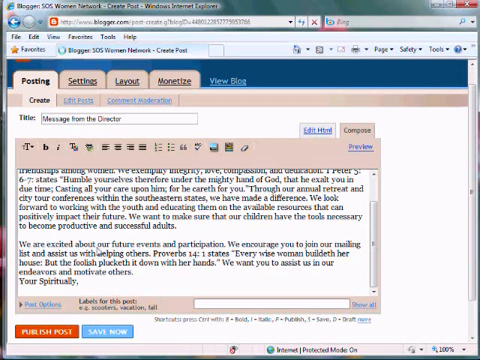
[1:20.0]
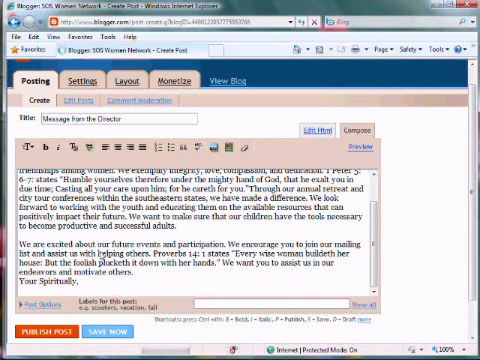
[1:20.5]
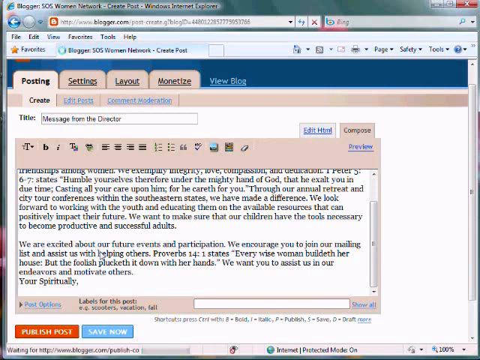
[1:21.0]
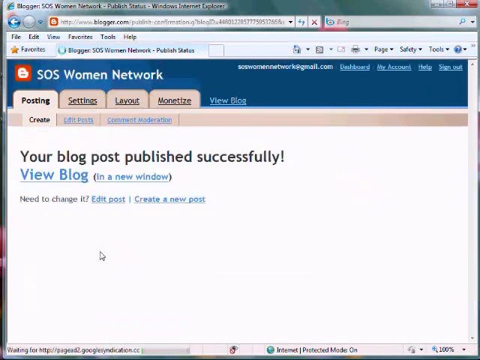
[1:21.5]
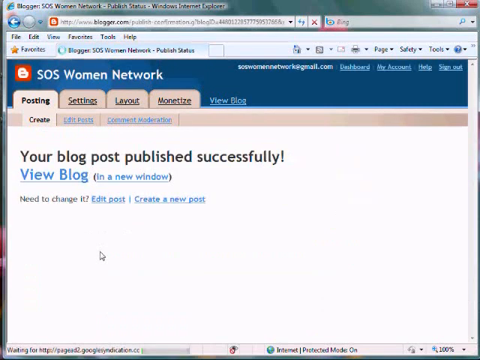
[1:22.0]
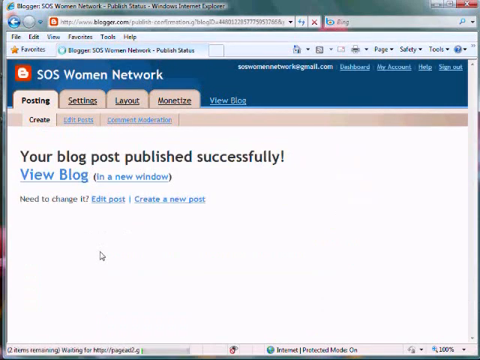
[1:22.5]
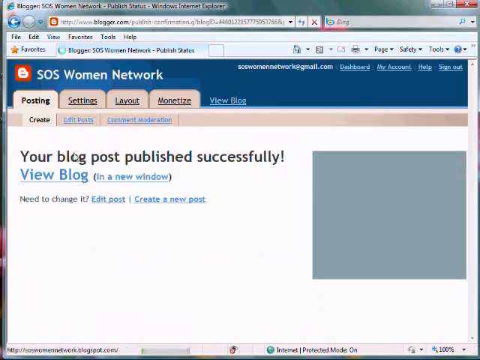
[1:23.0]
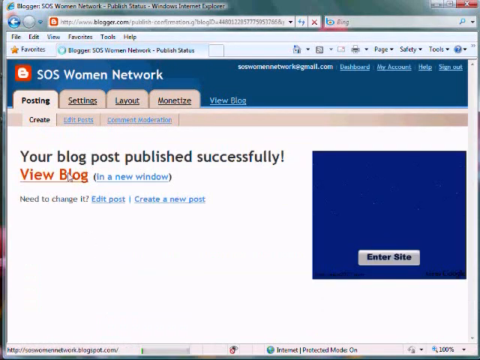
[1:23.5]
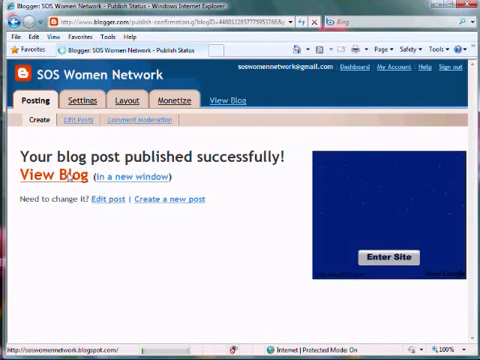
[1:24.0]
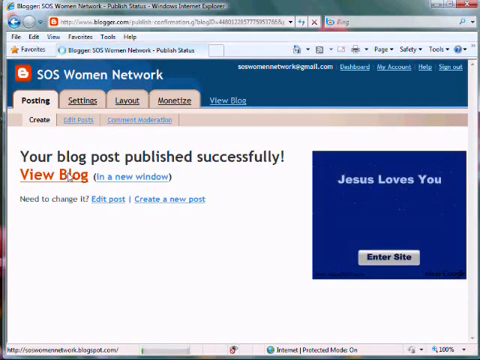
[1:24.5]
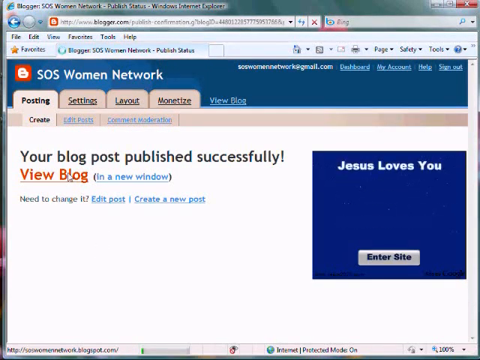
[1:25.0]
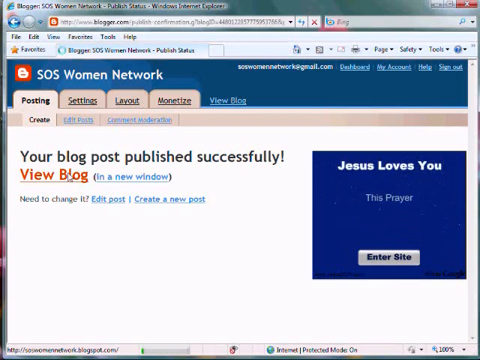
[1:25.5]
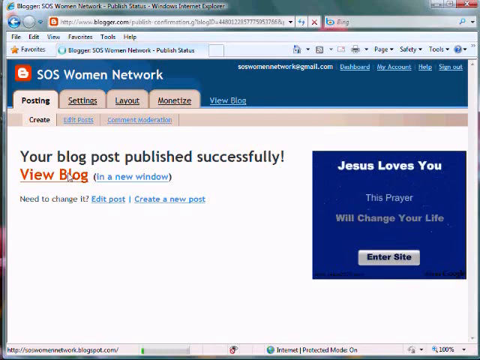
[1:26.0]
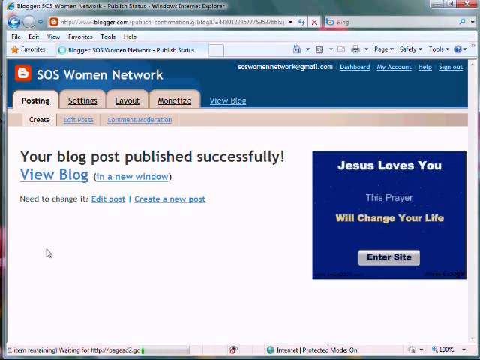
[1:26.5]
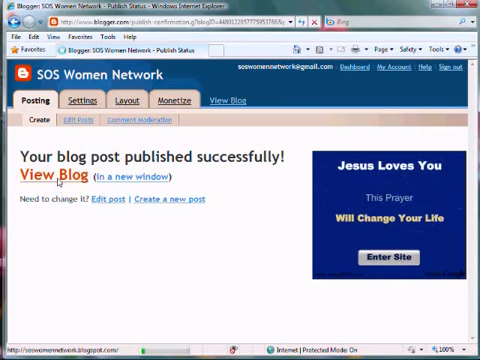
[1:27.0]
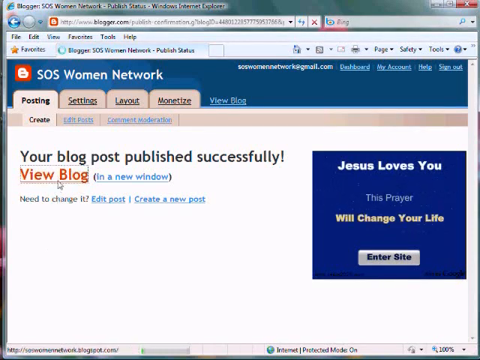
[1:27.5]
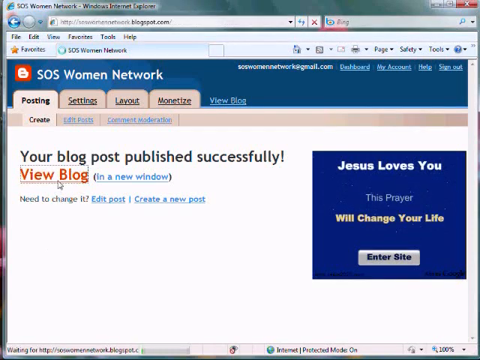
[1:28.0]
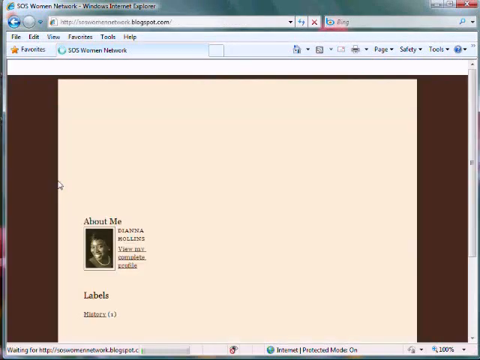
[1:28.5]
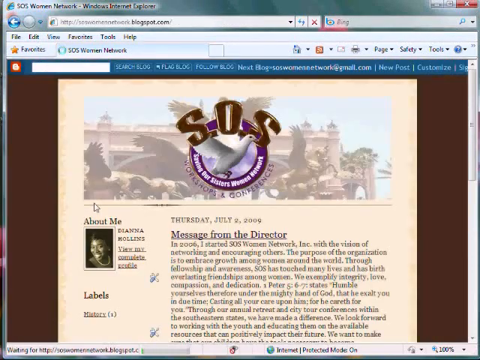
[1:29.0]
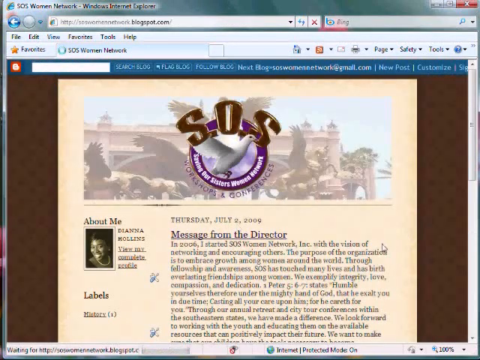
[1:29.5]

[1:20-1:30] The user clicks the publish post button, and the page loads before the next page appears. It has the same layout as before, but the title and body input boxes are replaced with text saying "your blog post published successfully", with buttons below it: one says "view blog" and the next says "in a new window" in parentheses. Below those buttons is text saying "need to change it" and two buttons for "edit posts" or "create a new post". A large ad appears on the right part of the panel, saying "Jesus loves you, this prayer will change your life, enter site" on what looks like a navy blue background. The user hovers over the view blog button and clicks it.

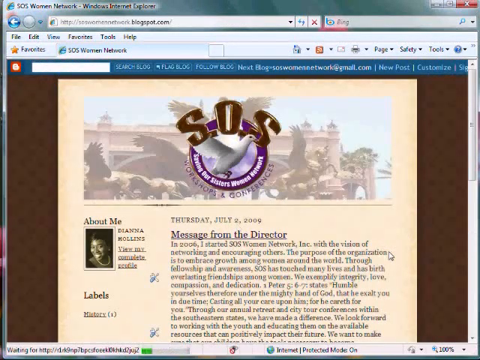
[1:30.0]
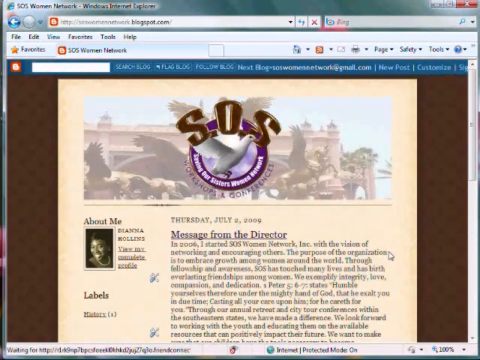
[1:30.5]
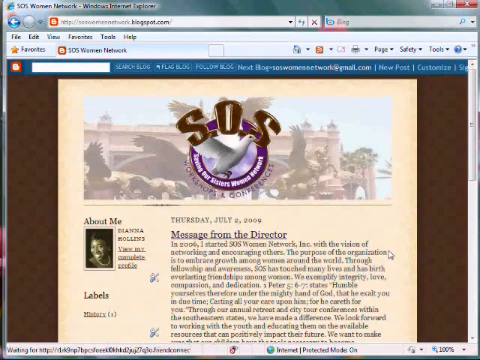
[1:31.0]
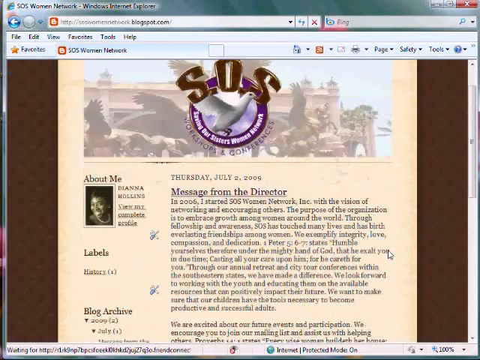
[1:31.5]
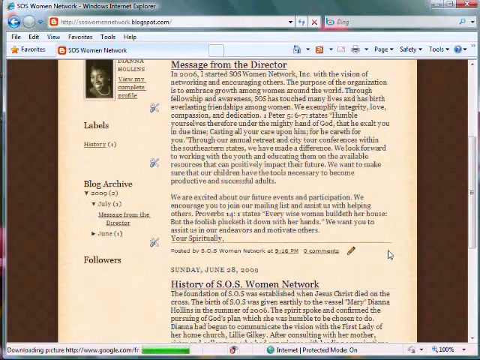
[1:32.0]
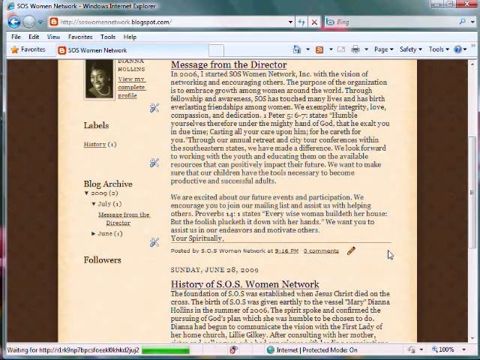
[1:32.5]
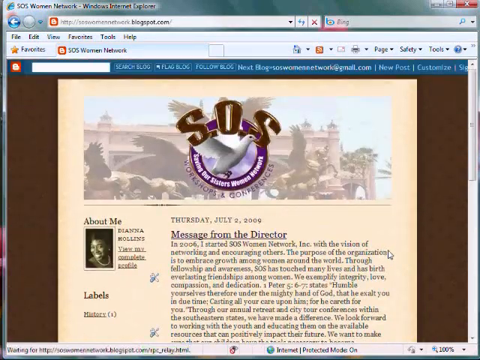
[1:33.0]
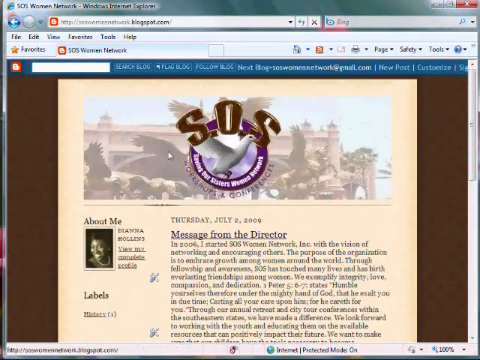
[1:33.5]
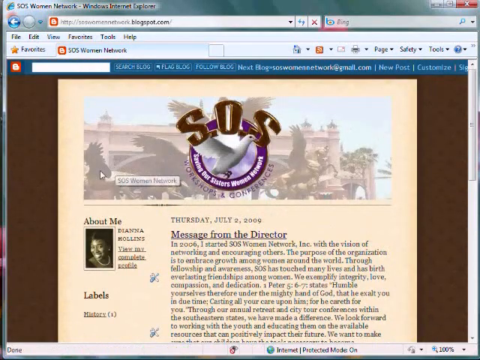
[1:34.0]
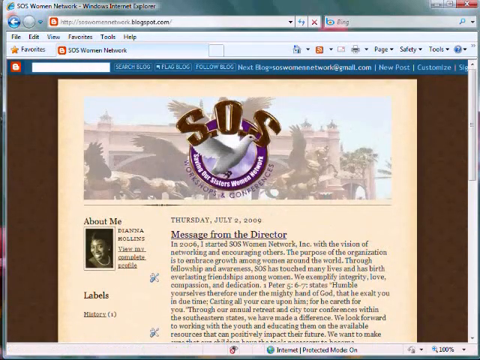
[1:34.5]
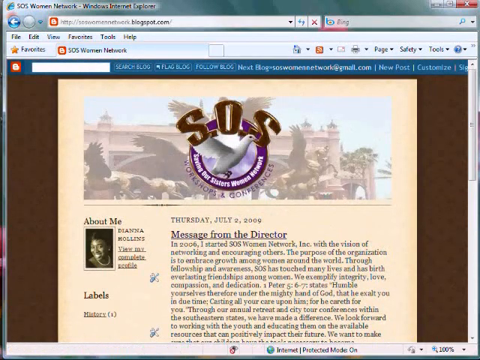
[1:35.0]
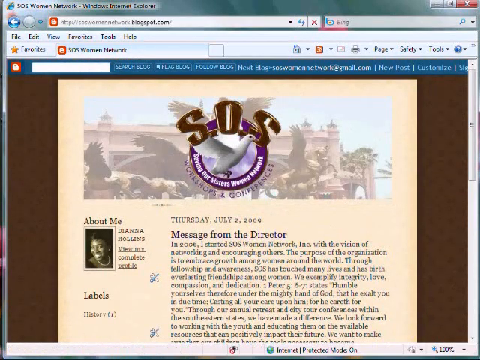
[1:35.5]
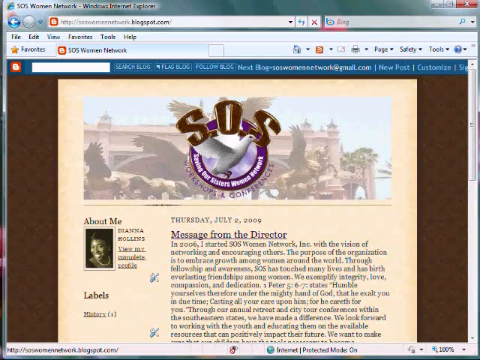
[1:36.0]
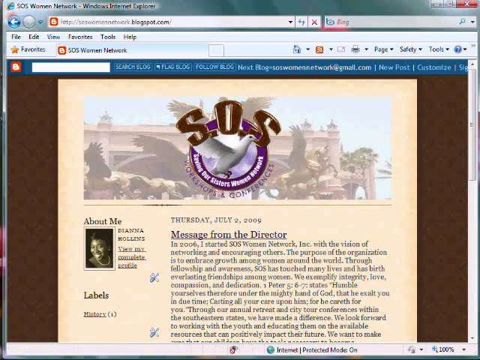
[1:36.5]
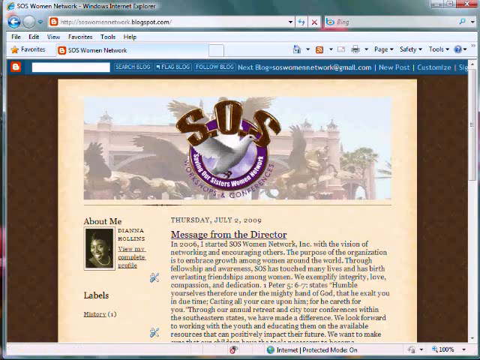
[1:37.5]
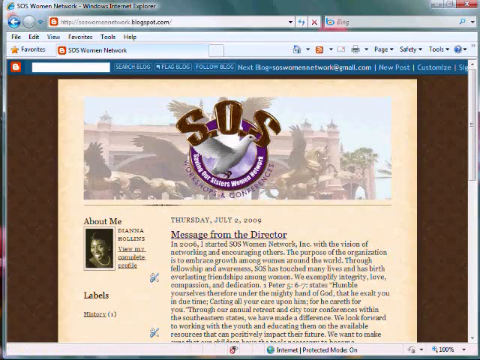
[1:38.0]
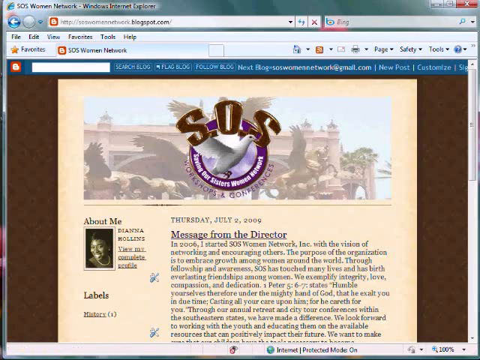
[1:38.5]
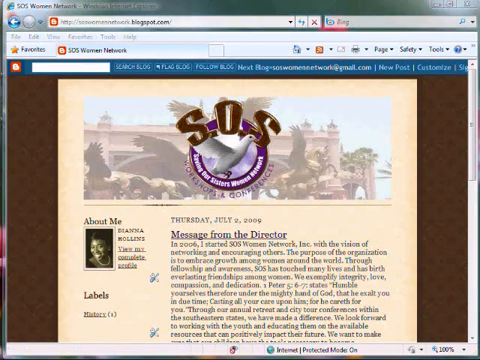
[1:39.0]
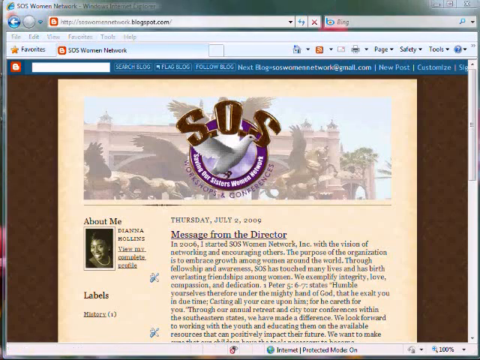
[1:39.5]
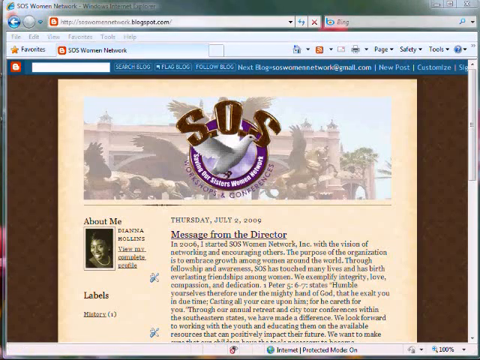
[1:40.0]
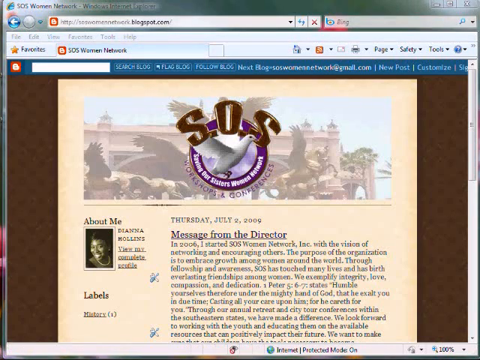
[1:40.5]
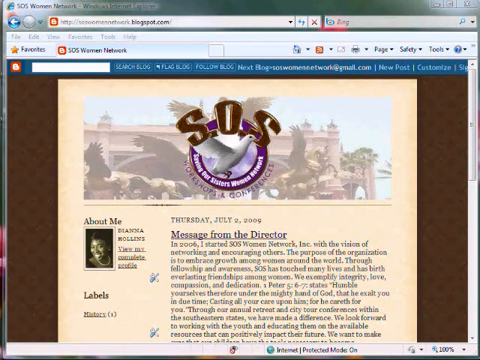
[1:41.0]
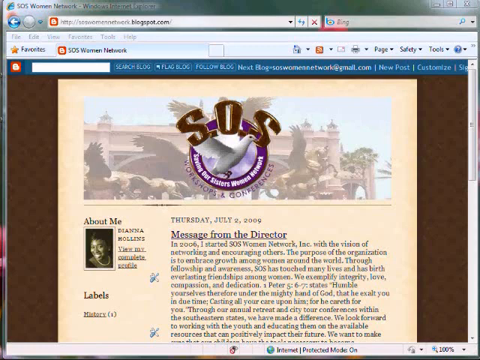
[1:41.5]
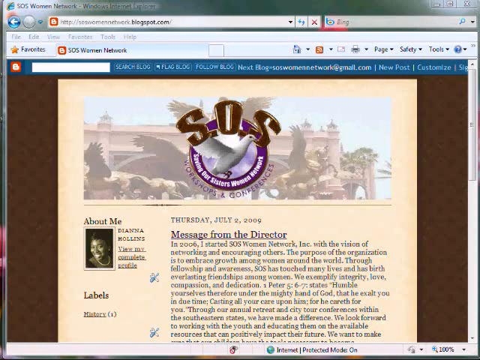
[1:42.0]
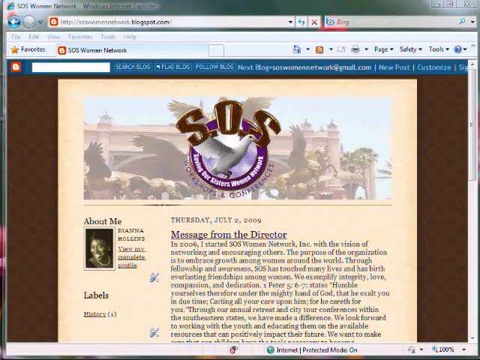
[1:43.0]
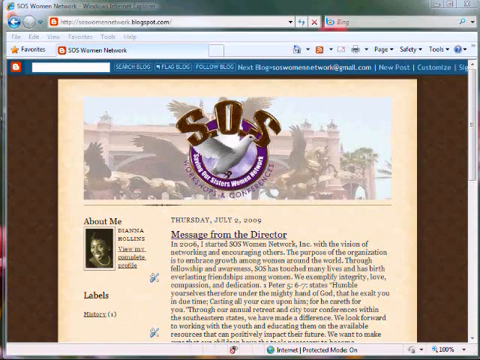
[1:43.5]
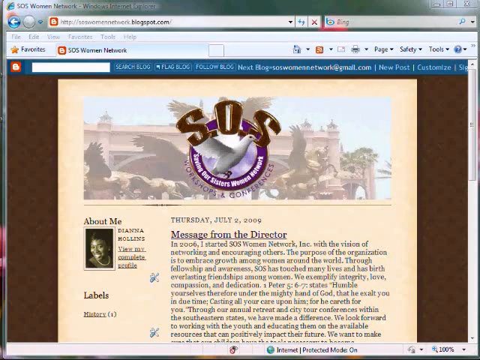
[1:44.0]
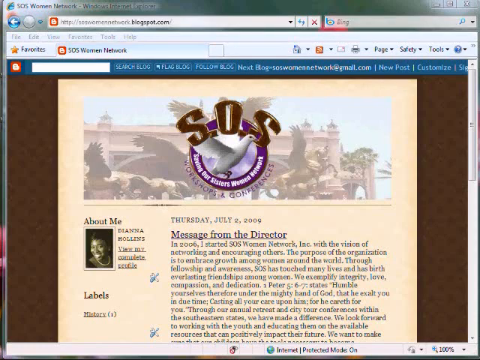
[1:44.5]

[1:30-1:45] The blog post opens in the current tab, and the blog has a very dark theme. The Blogger top navigation bar is a dark blue, the blog's background is brown with a checkered pattern, and the main body of the blog is beige, looking like older paper. A banner at the top appears to have a building as its background and is almost translucent, with a logo in the middle: a purple circle with a white dove inside, big brownish-gold letters reading "SOS" above the dove, and "workshops and conferences" in purple beneath the circle. The new blog post appears below, and the person recording scrolls down to show the post "message from the director", posted on Thursday, July 2nd, 2009. As they scroll further, part of the previous post is revealed, titled "history of SOS women at work". The video ends there.